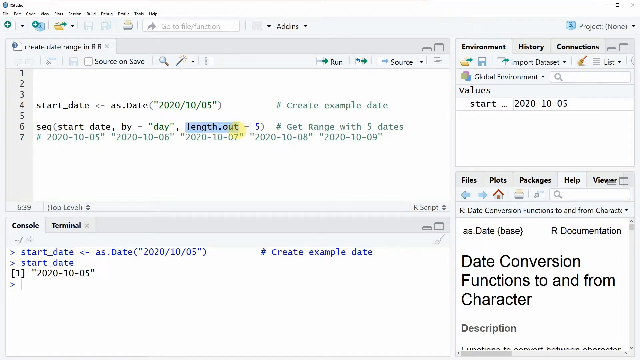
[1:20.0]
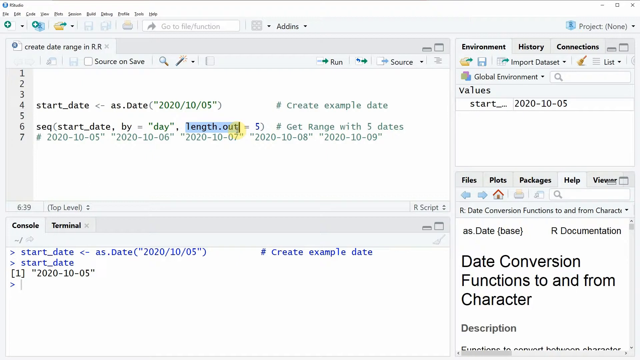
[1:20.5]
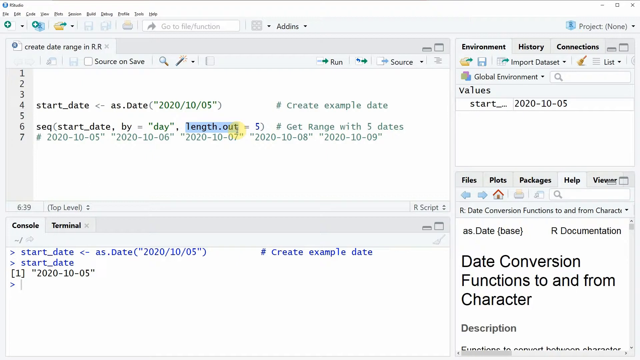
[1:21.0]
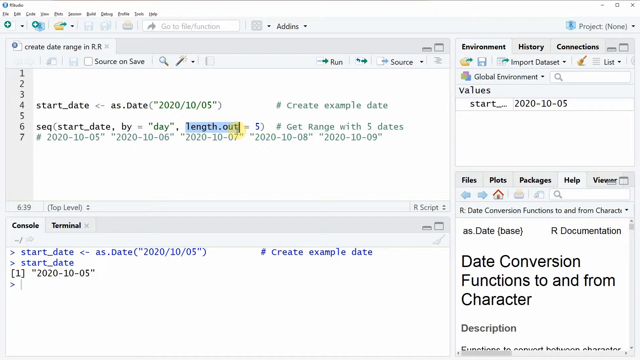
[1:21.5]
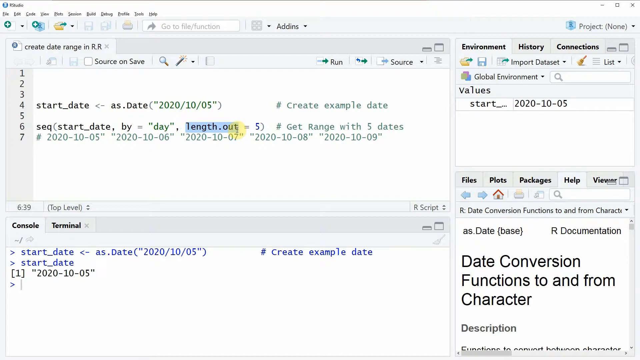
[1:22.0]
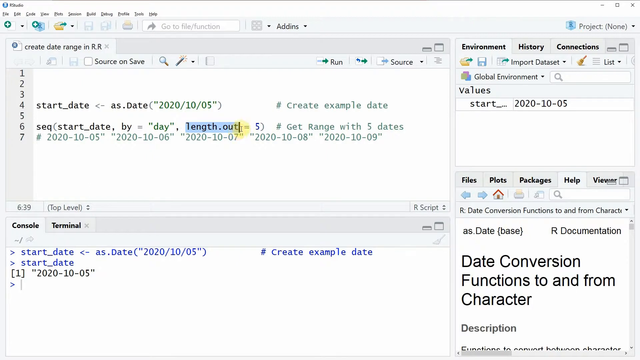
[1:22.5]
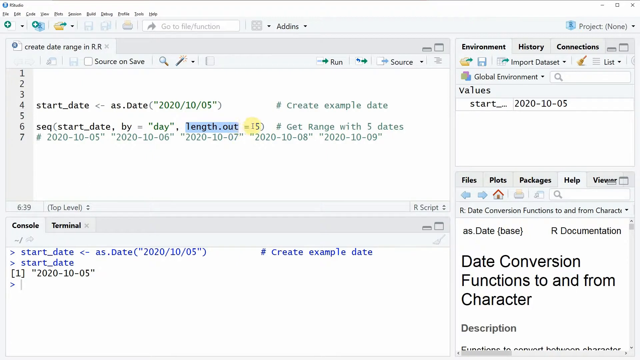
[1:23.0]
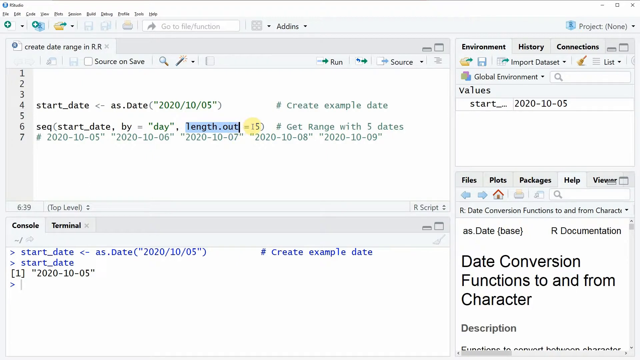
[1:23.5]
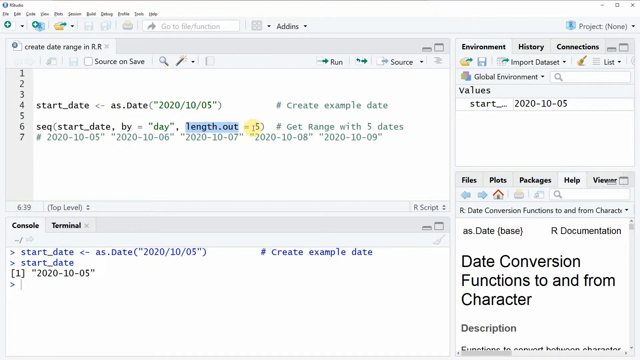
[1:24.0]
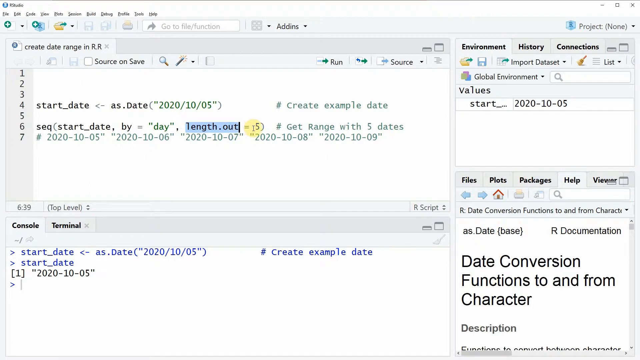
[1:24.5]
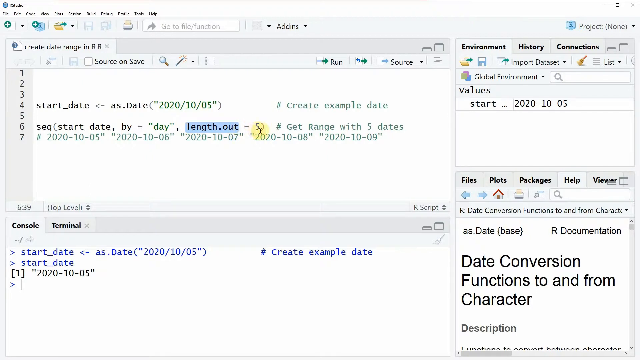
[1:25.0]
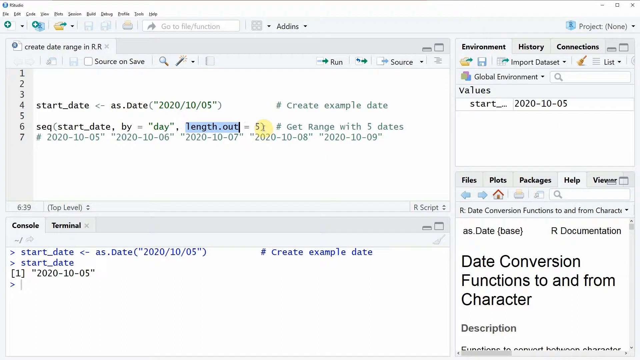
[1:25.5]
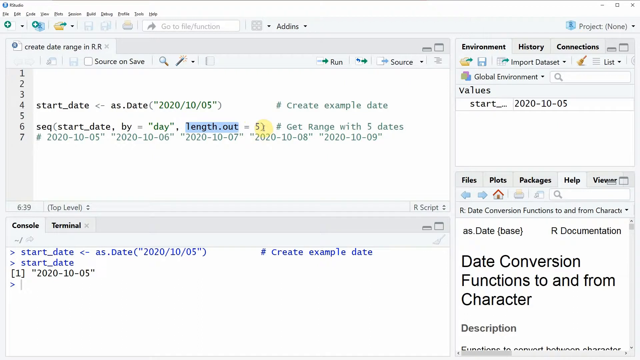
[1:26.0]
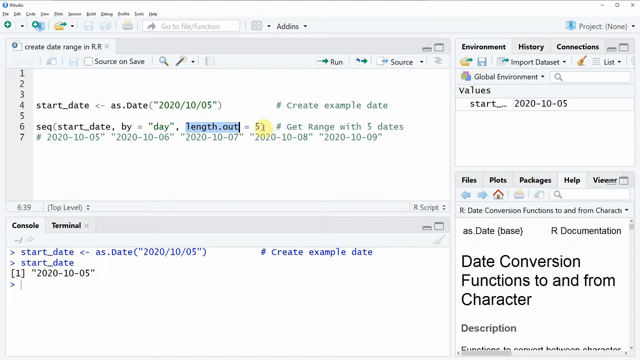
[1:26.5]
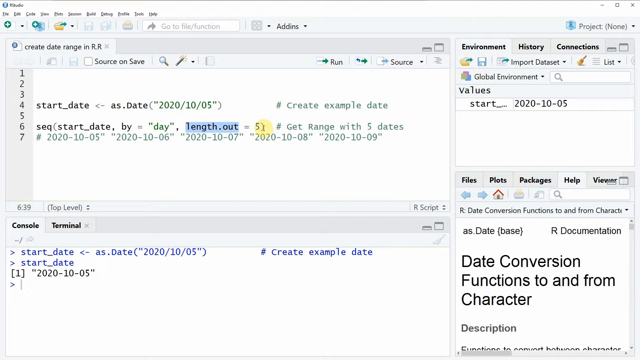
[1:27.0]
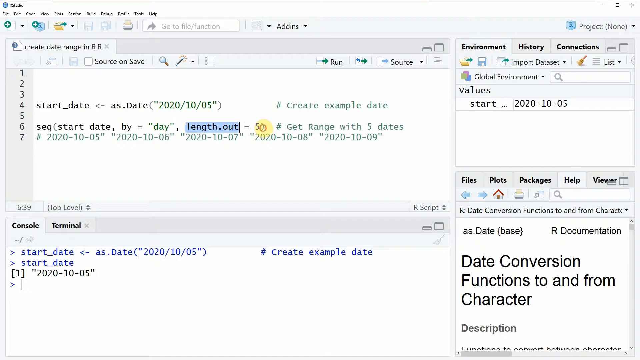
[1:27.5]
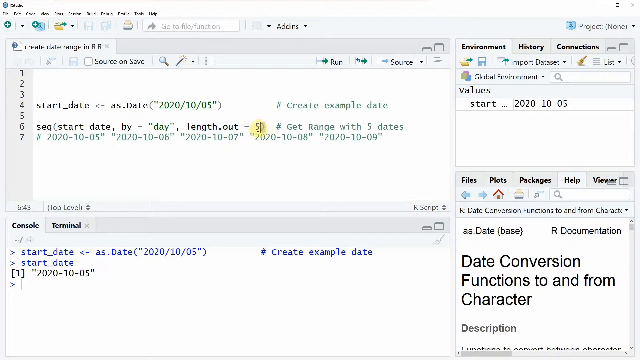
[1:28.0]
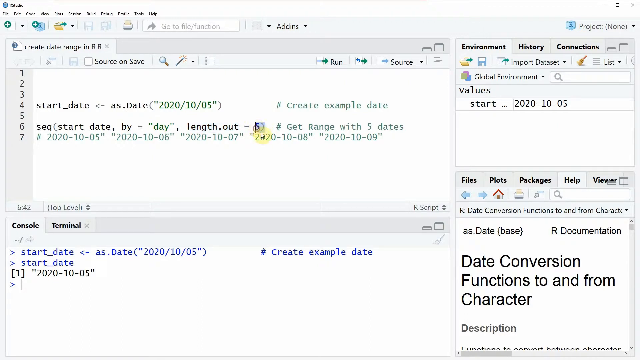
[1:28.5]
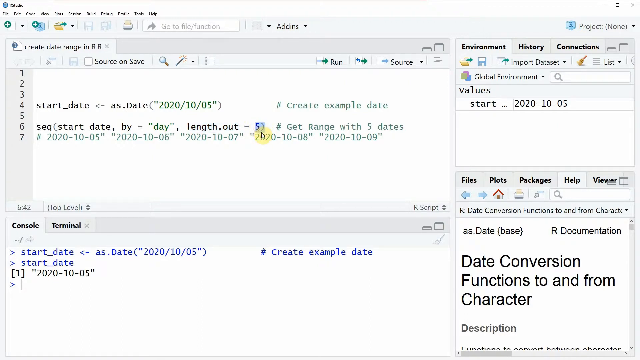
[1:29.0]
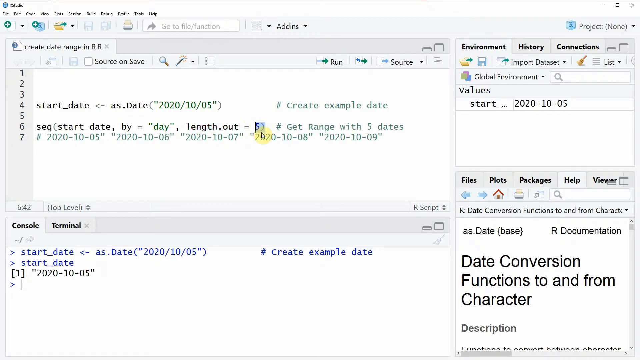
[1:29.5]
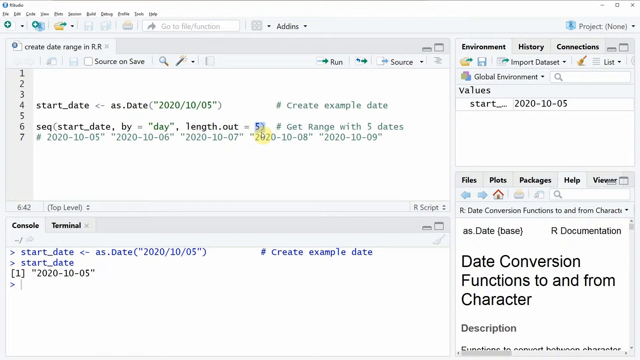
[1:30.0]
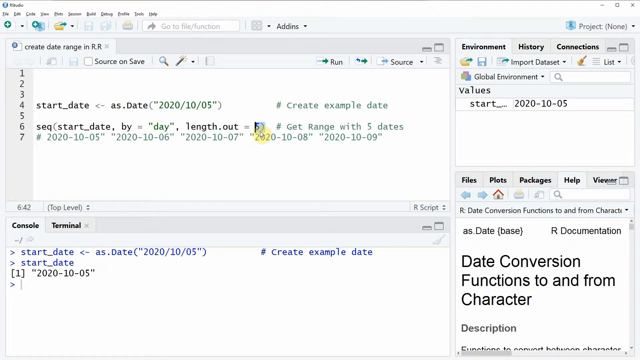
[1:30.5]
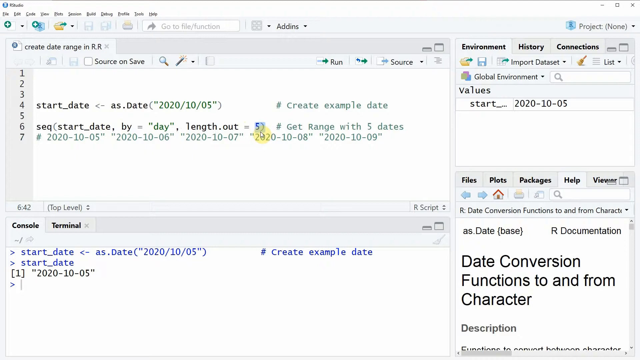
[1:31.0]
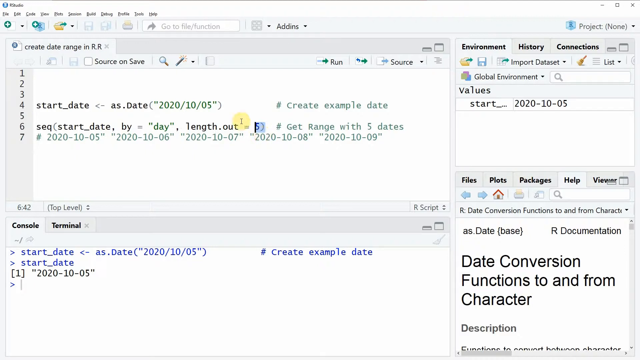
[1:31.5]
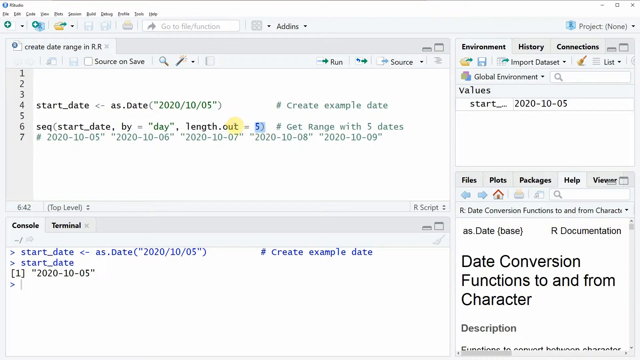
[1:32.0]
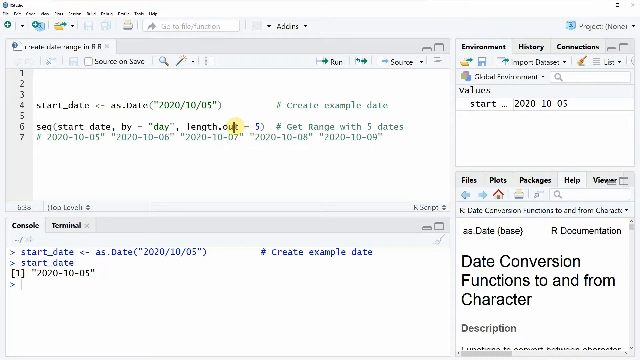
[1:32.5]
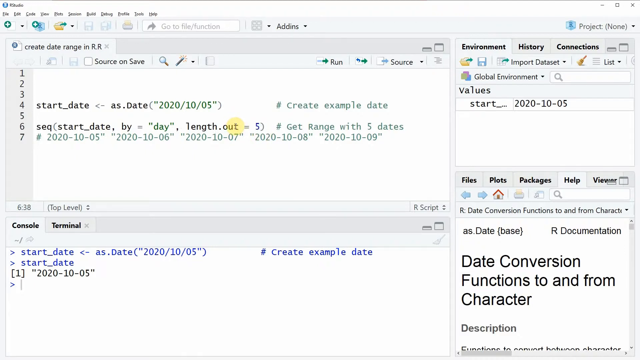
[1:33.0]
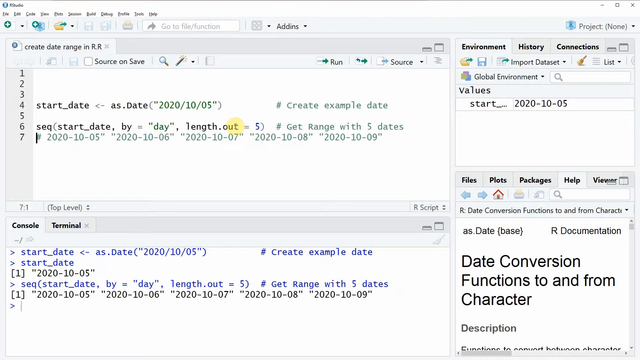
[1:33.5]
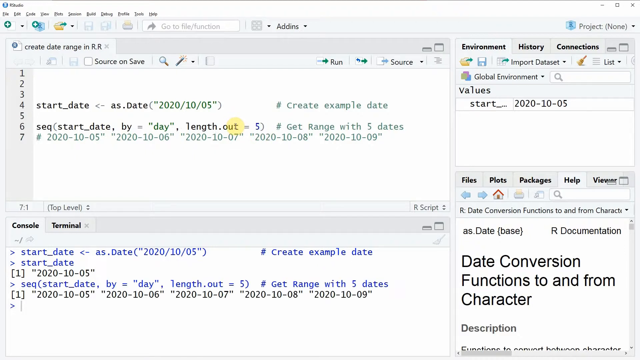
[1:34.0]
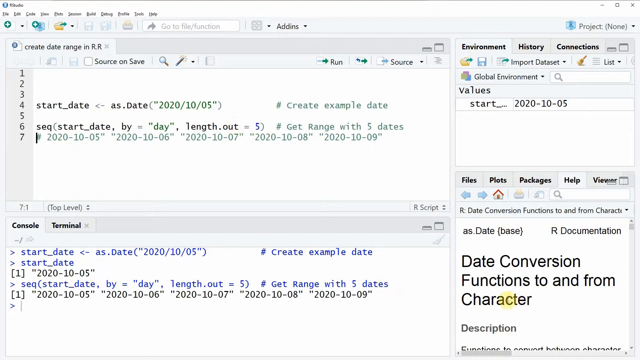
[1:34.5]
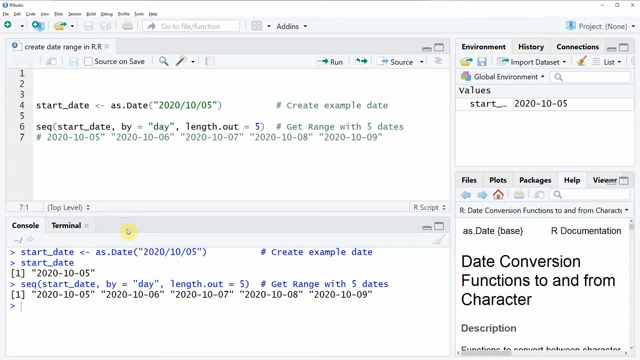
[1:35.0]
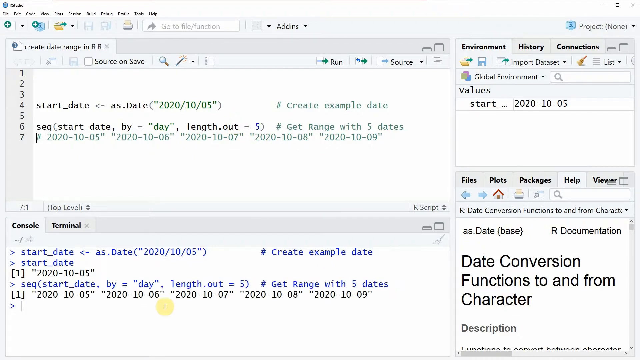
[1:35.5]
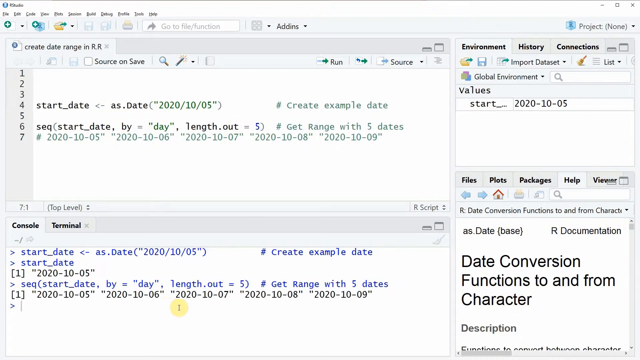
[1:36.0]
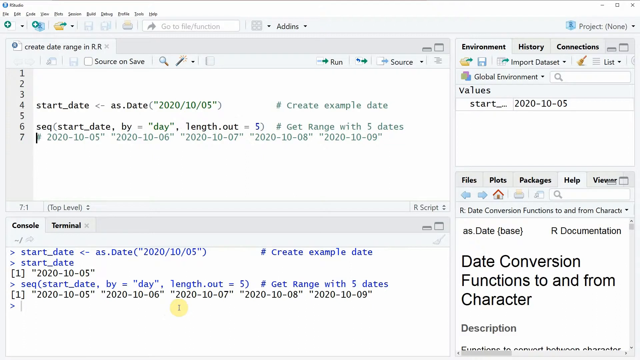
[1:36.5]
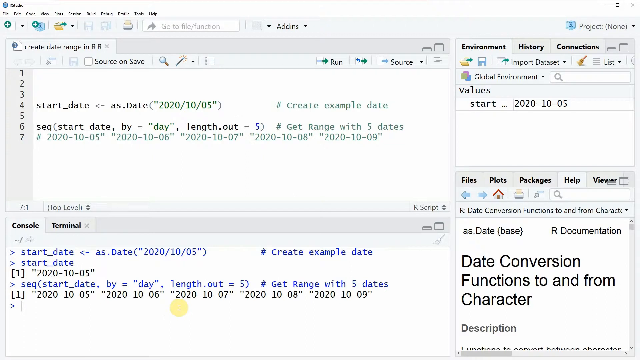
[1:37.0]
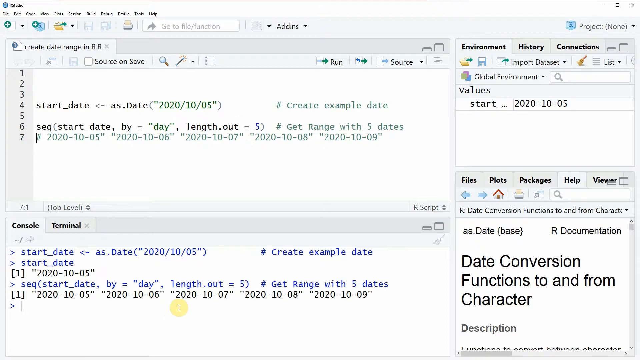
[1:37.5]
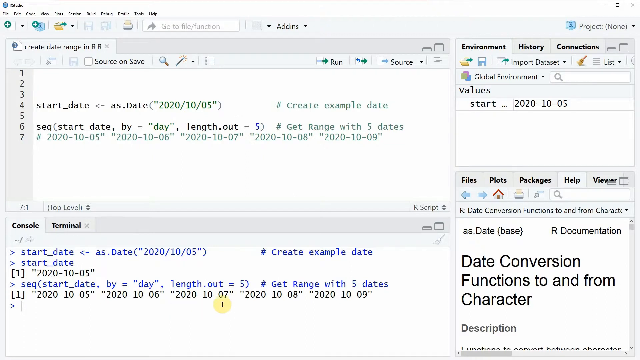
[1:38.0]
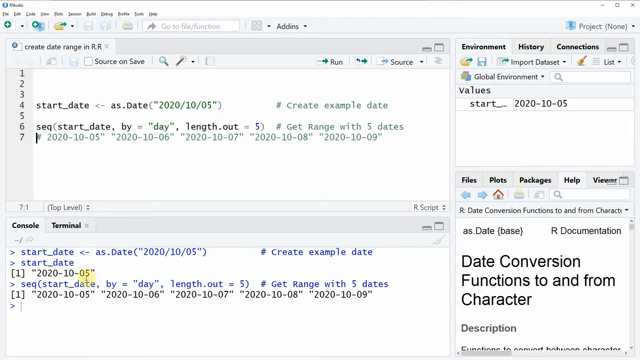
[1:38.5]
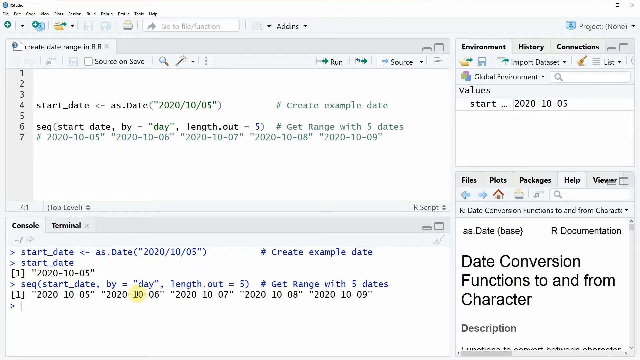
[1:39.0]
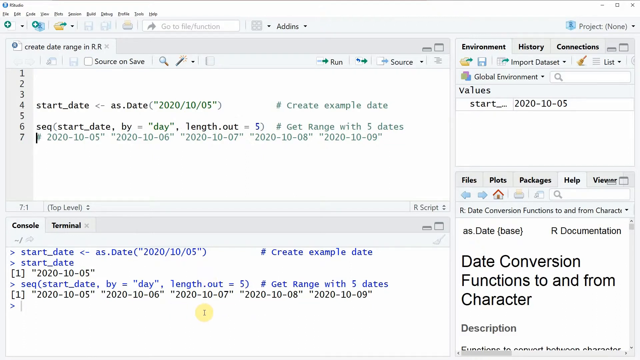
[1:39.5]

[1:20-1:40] Code is on the left-hand side of the screen, and the right-hand side has sentences such as "date conversion function to and from character", laid out in order. Some areas of the code are highlighted and others are not.